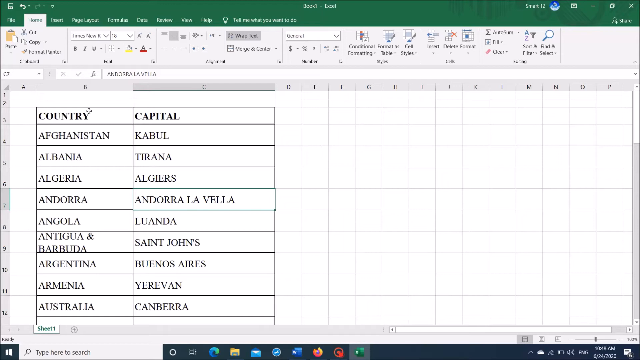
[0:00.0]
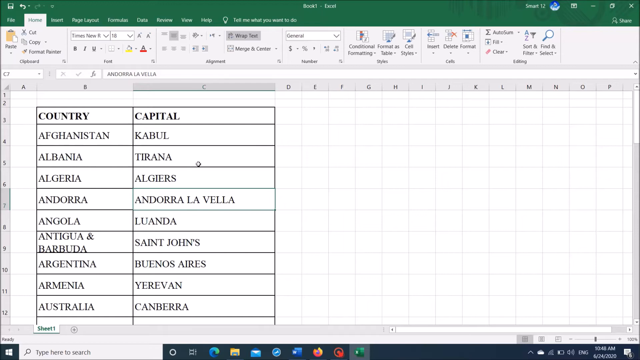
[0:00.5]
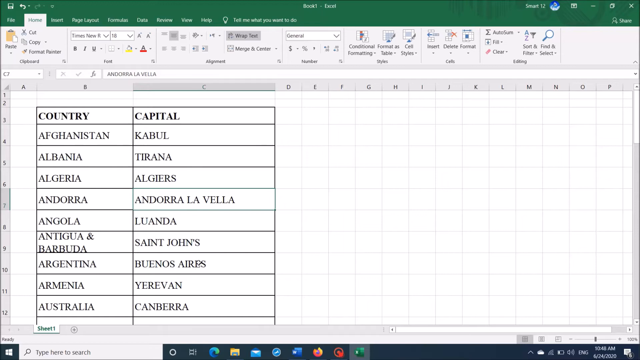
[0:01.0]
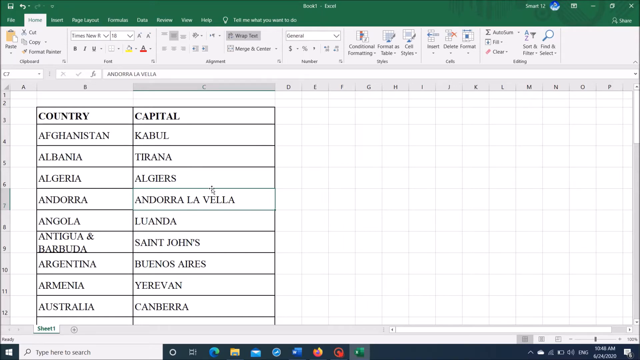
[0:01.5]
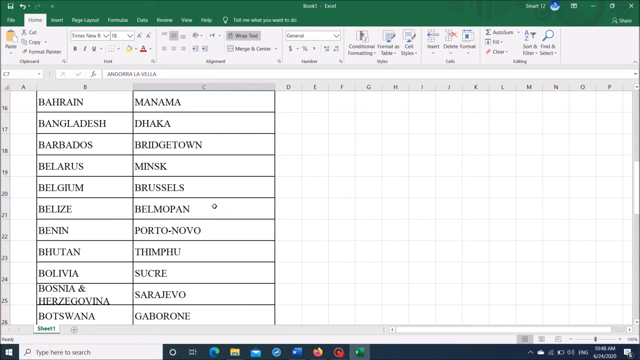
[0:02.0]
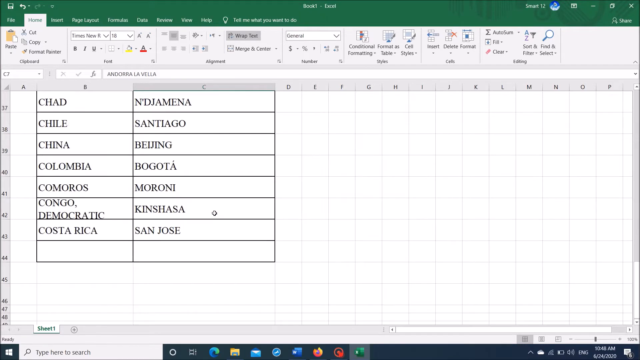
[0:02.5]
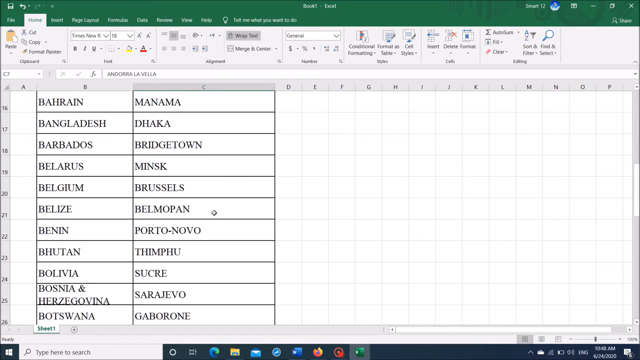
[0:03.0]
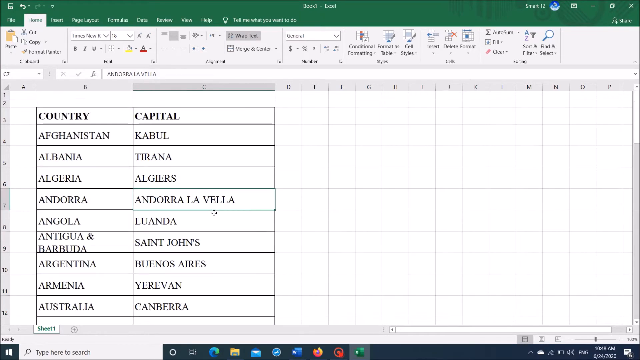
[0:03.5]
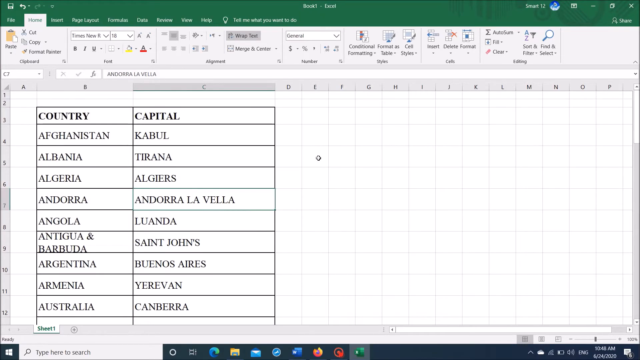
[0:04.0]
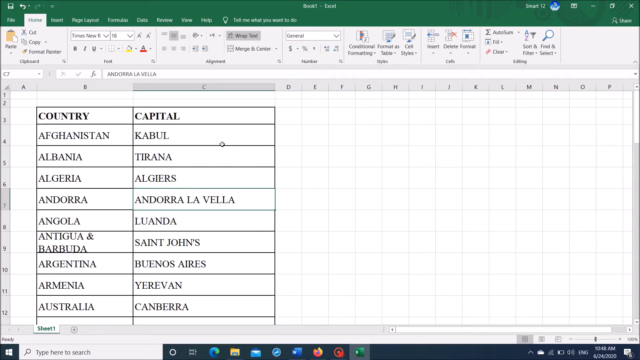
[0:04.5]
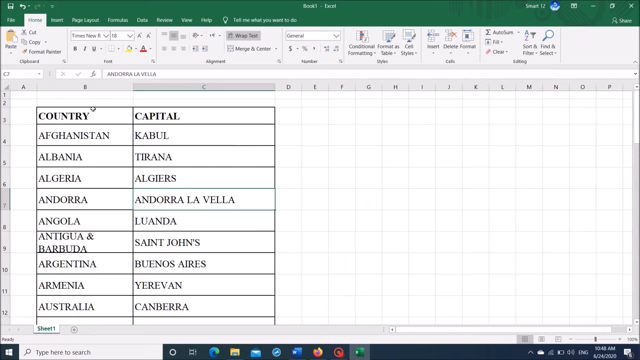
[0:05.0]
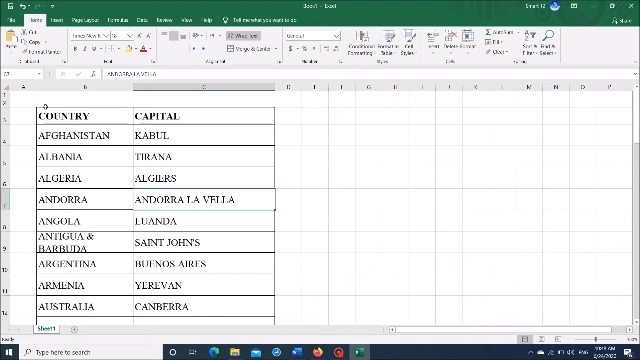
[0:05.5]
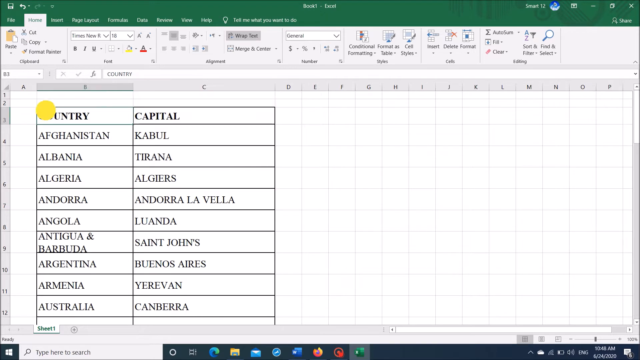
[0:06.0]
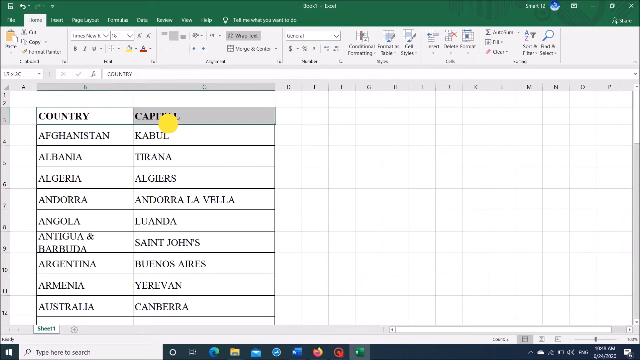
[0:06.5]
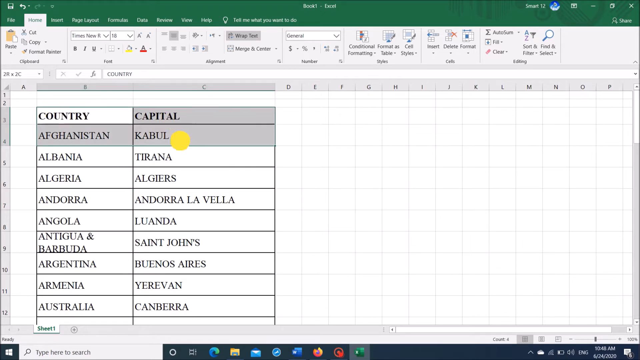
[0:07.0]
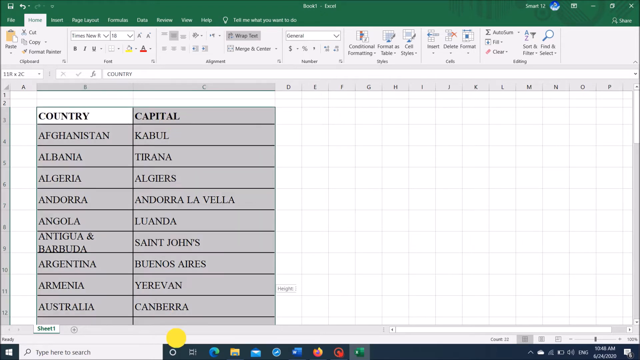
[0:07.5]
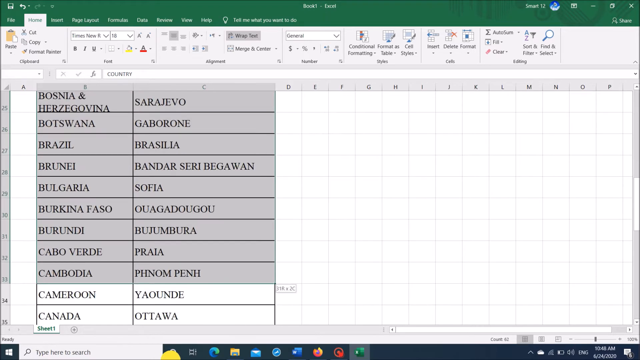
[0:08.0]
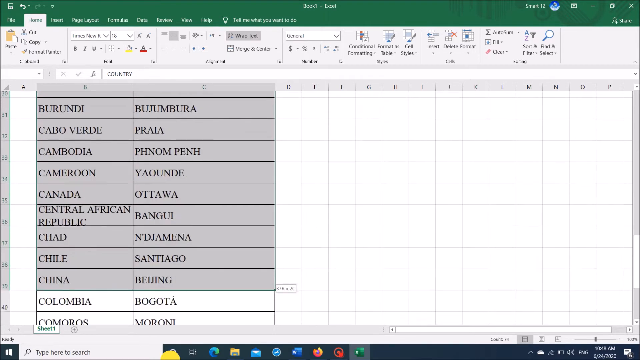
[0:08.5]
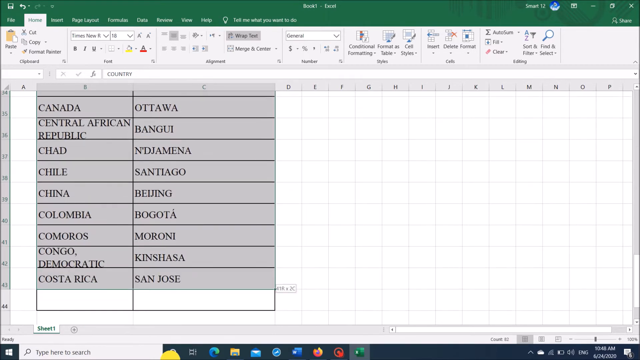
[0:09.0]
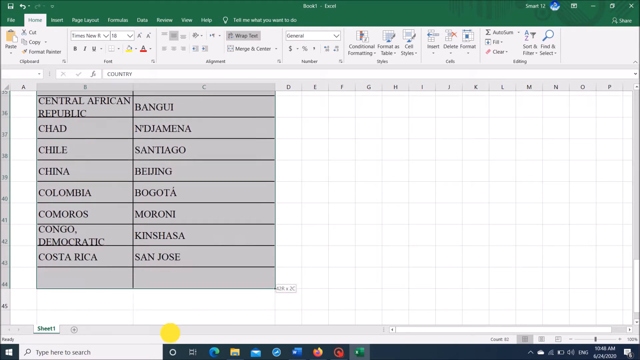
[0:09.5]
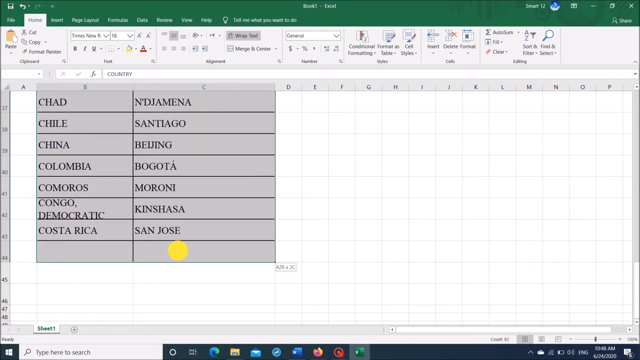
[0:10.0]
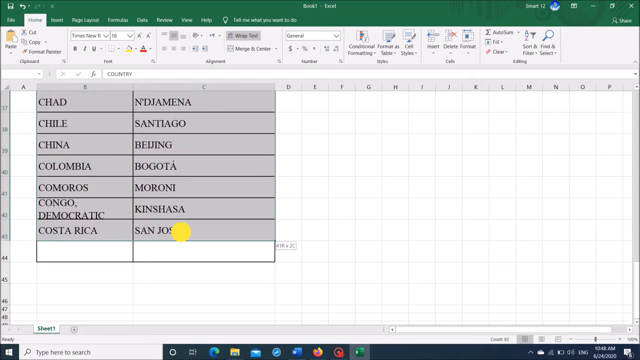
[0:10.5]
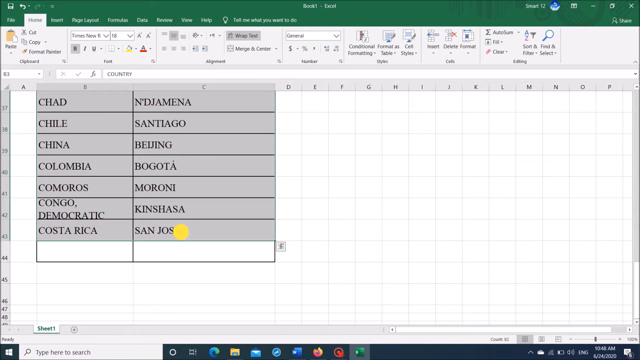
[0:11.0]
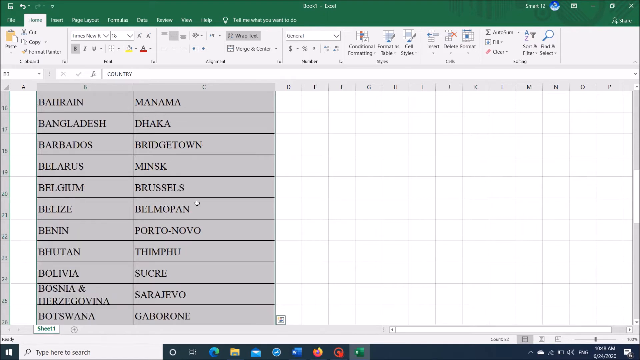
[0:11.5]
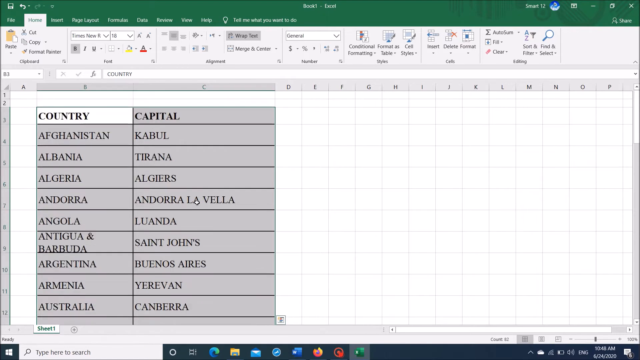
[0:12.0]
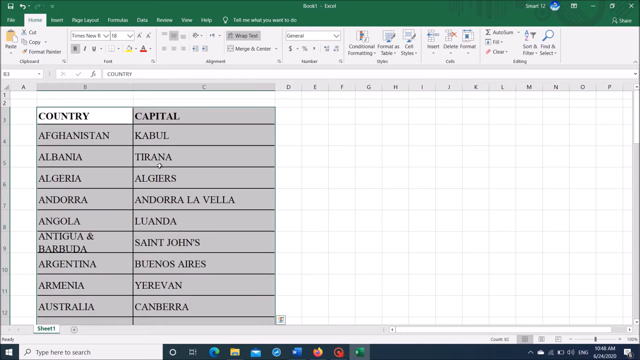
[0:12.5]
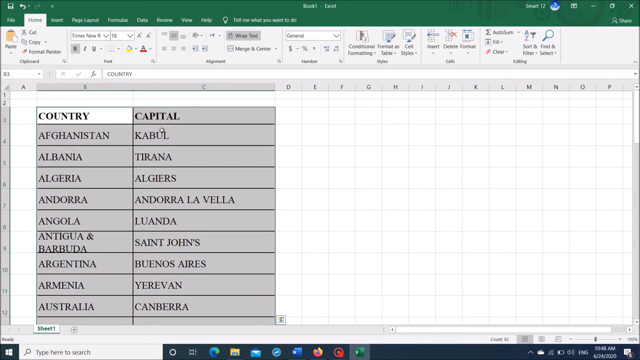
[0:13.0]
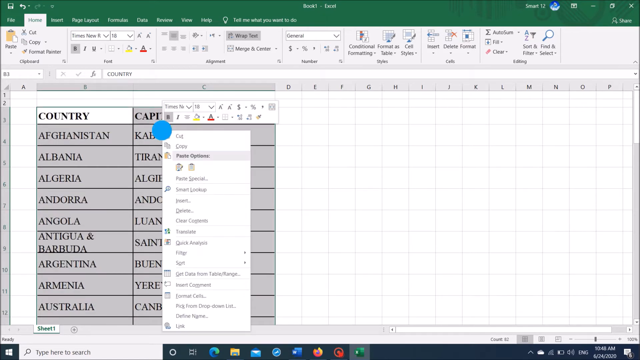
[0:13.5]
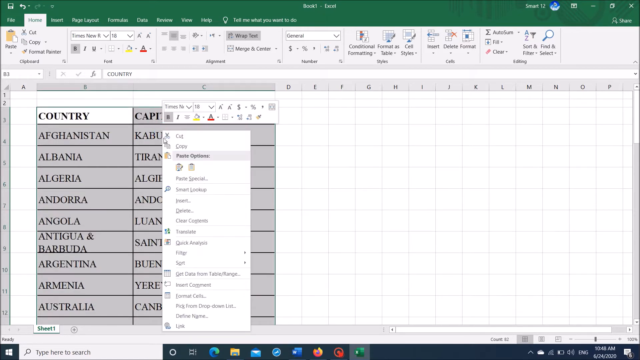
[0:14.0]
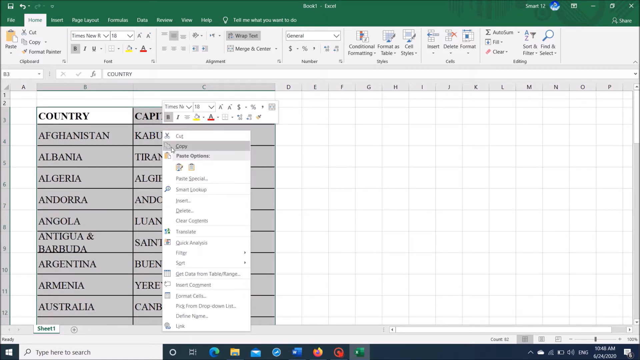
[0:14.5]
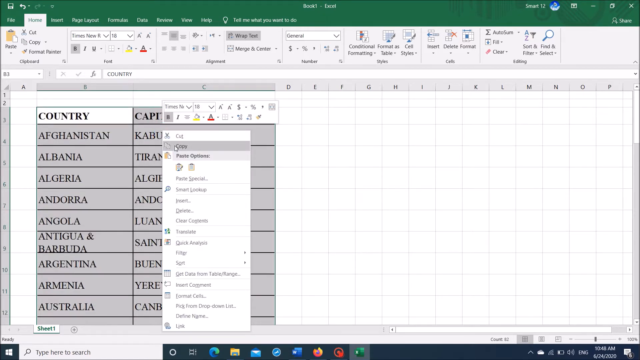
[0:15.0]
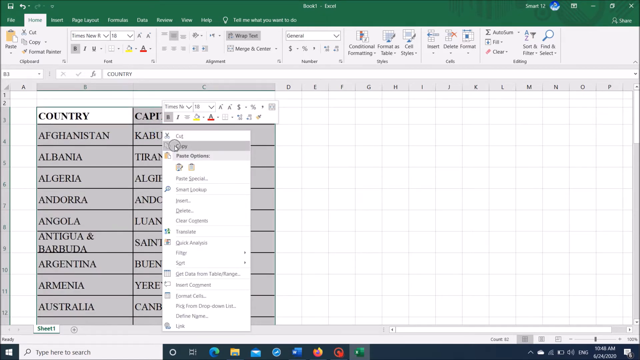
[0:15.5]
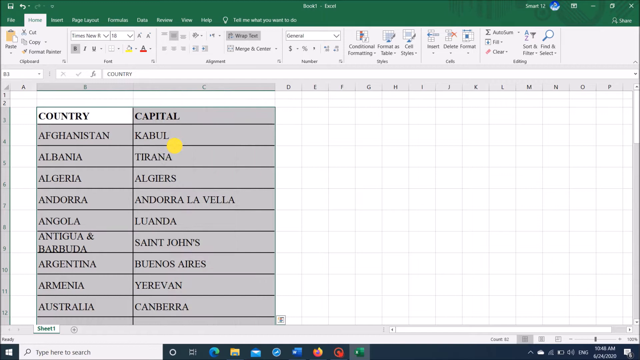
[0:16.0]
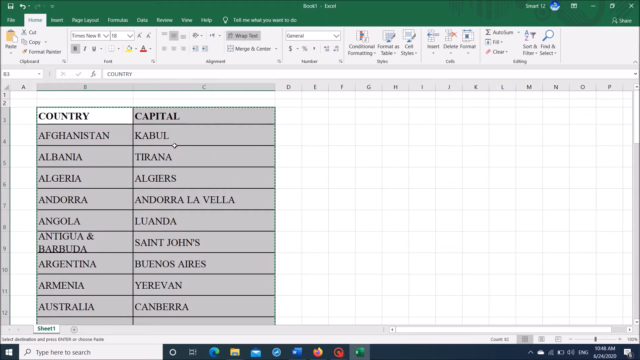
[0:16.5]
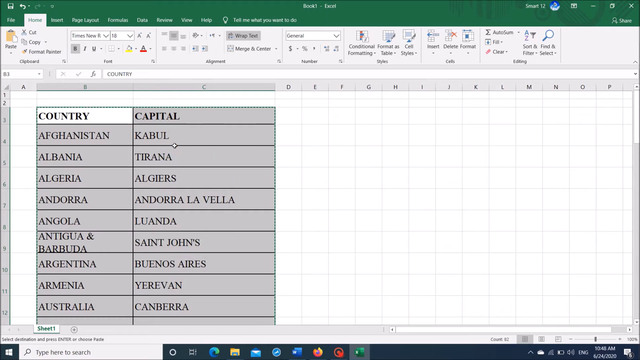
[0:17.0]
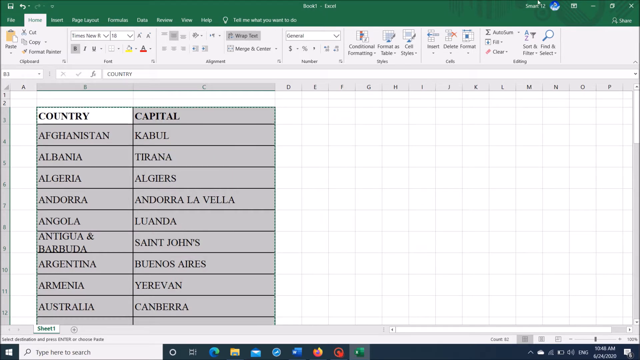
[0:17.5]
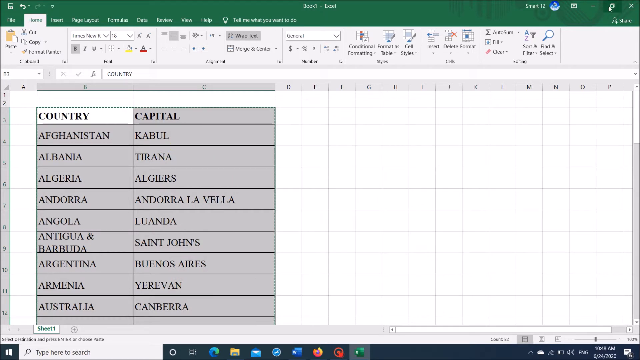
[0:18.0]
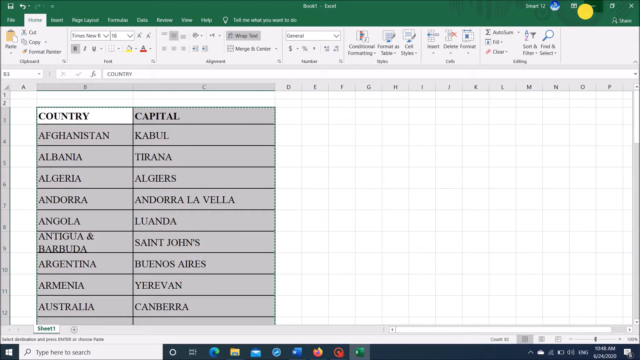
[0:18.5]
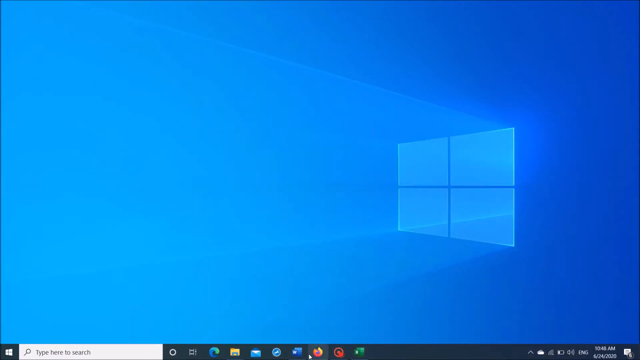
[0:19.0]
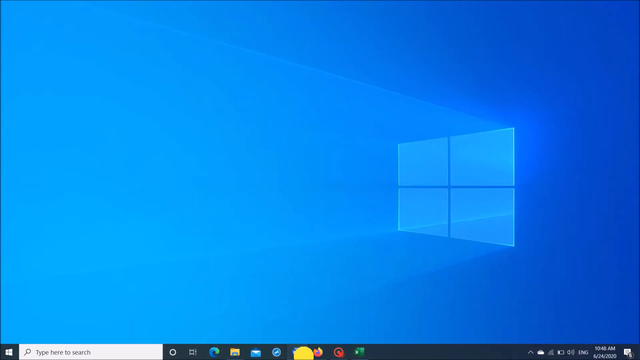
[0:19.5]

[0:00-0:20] Someone seems to be working on a computer, apparently in Microsoft Excel. There seem to be two columns with a list underneath. The left-hand column lists countries, including Afghanistan, Albania, Algeria, Andorra, Angola, Argentina and Armenia, and the right-hand column lists capitals, including Kabul, Tirana, Algiers, Luanda and St. John's. The view slides all the way down and then goes back up. The person highlights the whole columns, which turn grey, then clicks on the word copy. Everything then disappears and the home page appears.